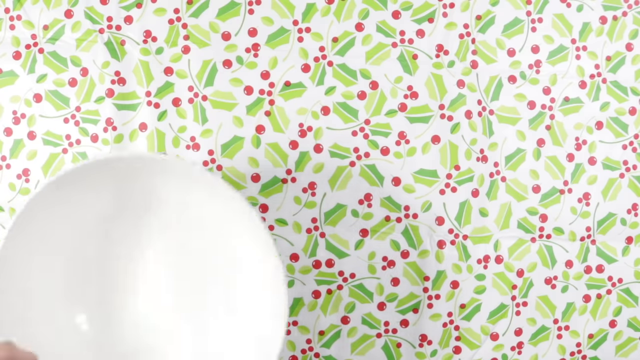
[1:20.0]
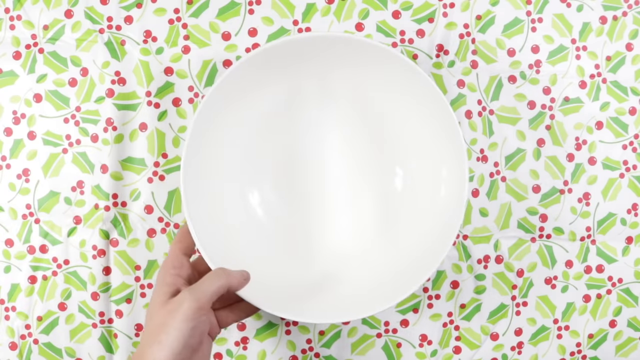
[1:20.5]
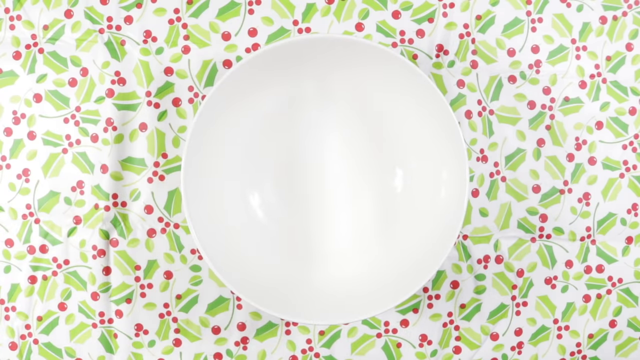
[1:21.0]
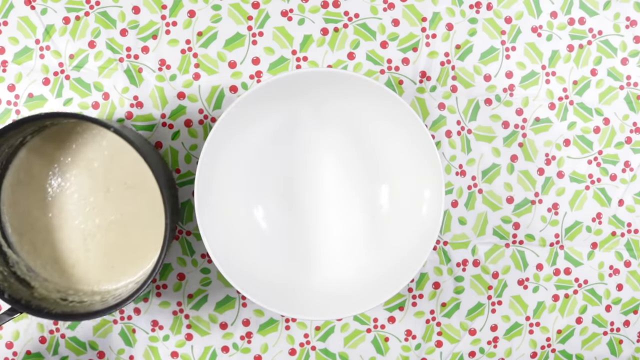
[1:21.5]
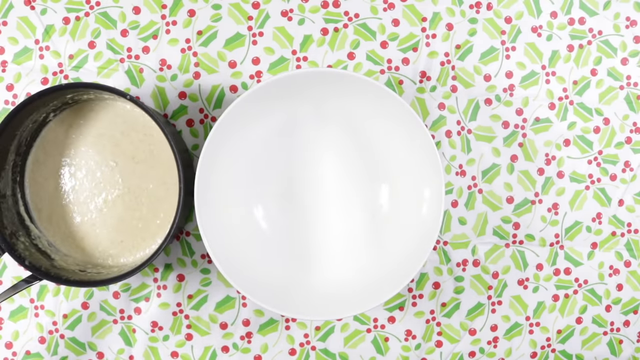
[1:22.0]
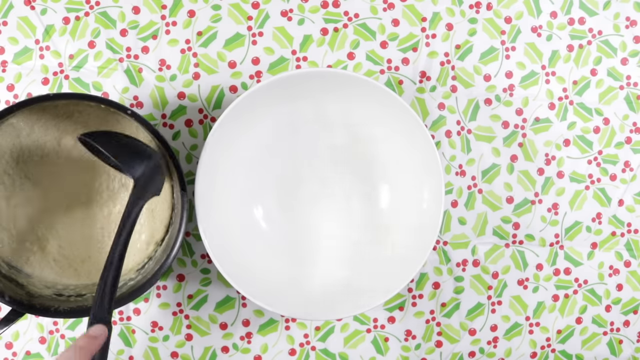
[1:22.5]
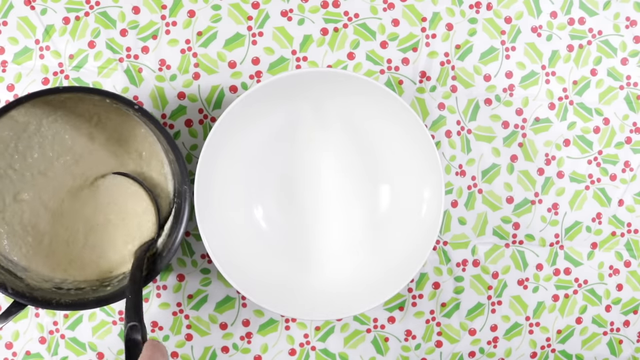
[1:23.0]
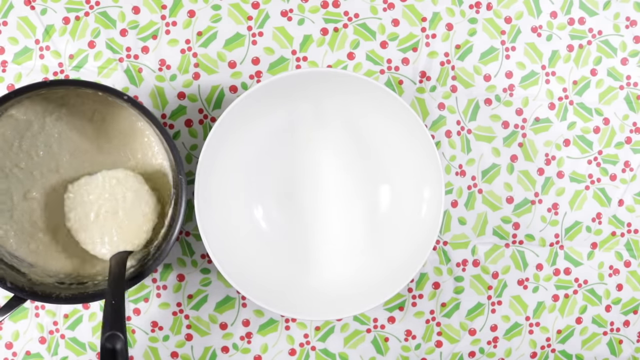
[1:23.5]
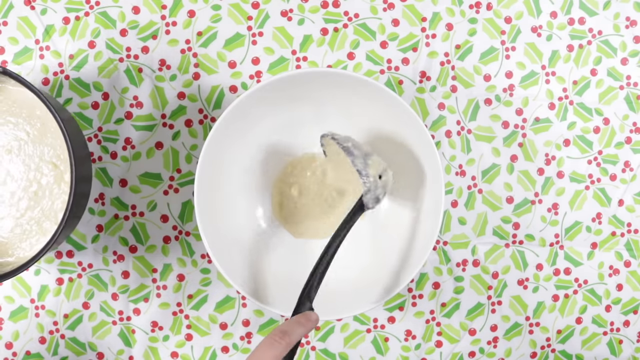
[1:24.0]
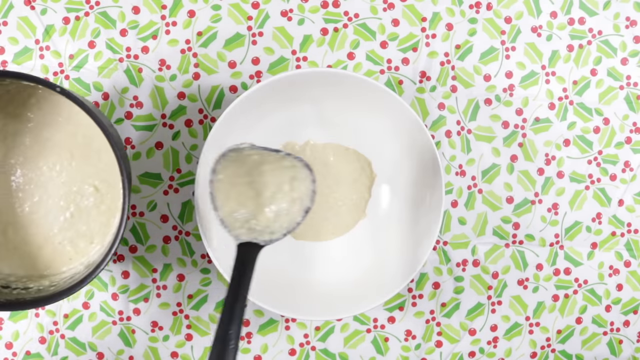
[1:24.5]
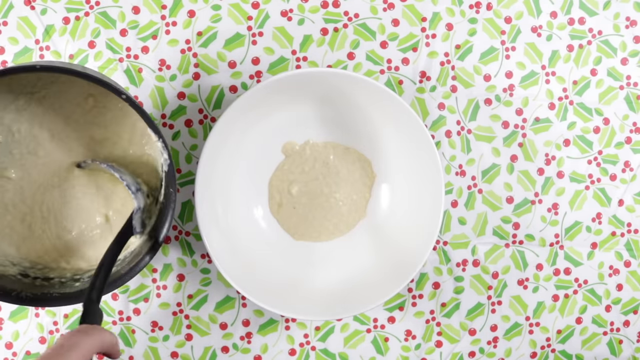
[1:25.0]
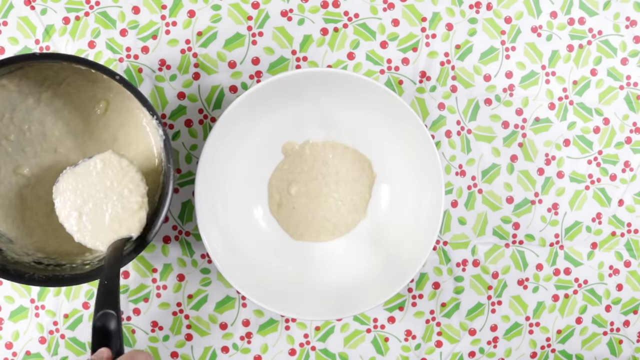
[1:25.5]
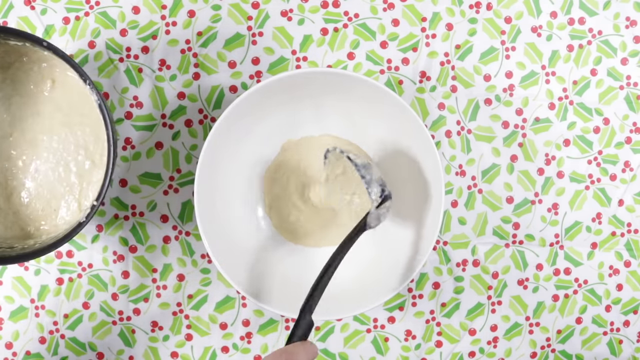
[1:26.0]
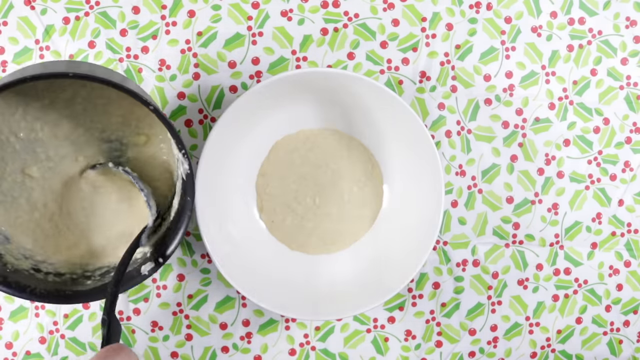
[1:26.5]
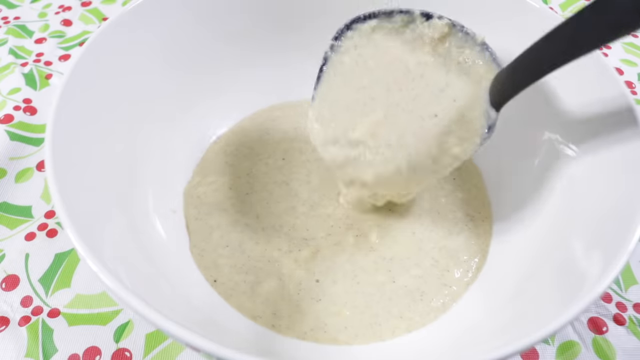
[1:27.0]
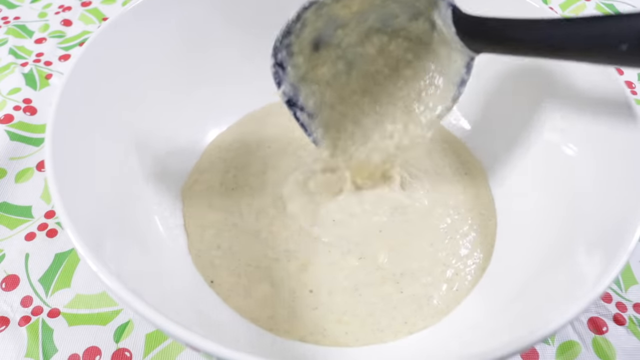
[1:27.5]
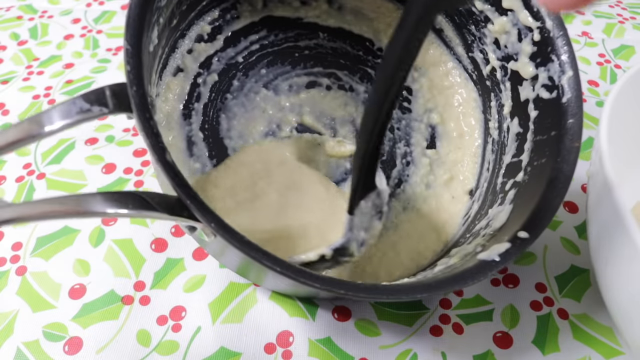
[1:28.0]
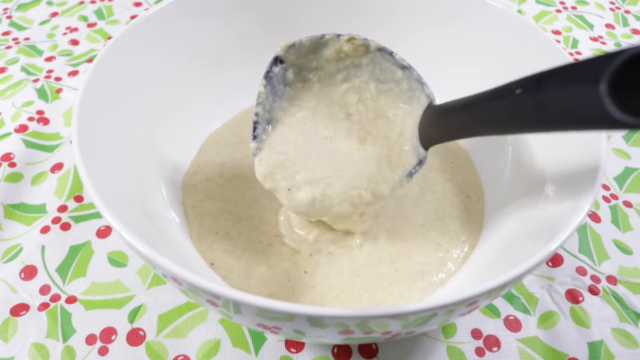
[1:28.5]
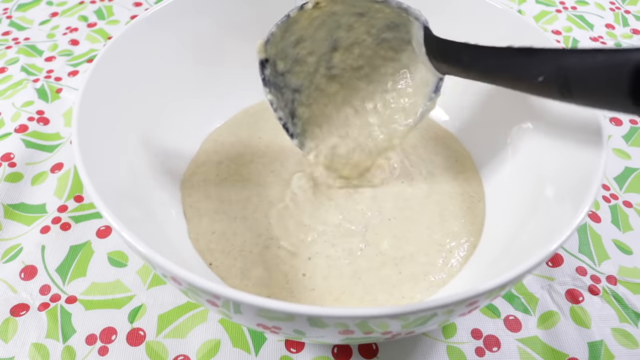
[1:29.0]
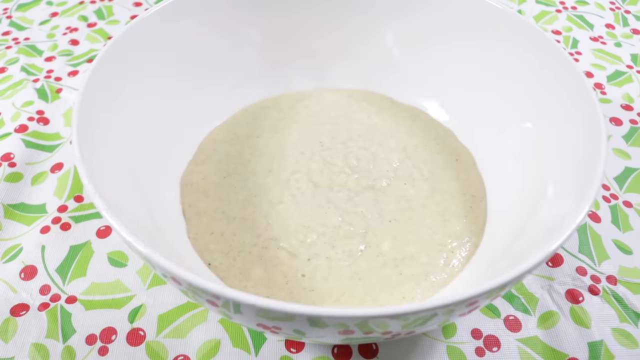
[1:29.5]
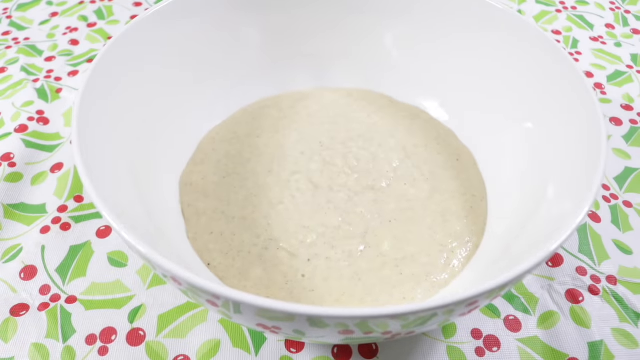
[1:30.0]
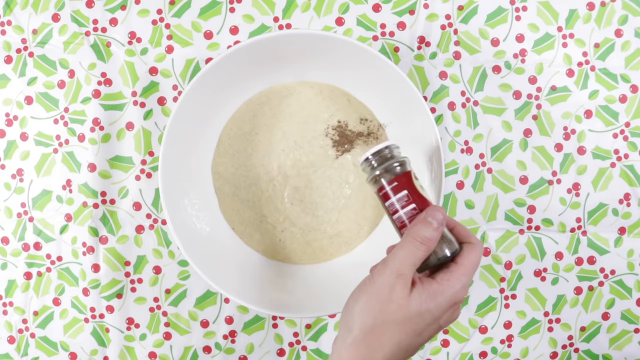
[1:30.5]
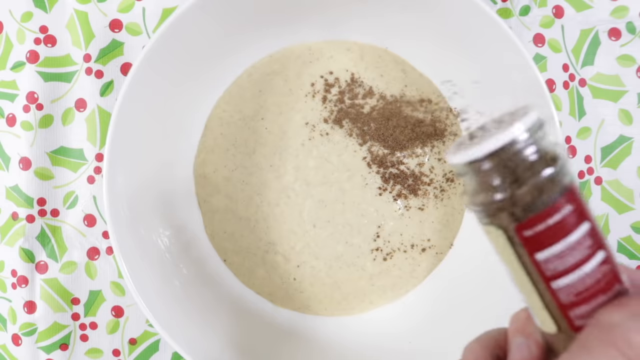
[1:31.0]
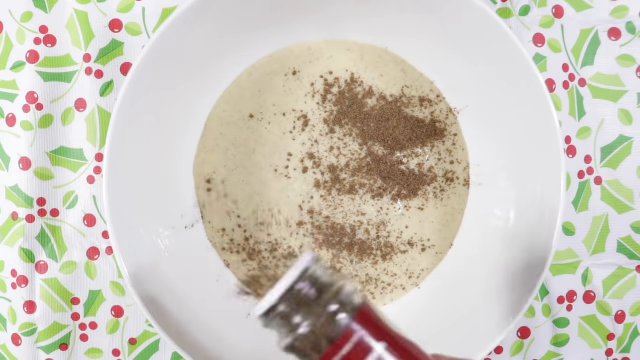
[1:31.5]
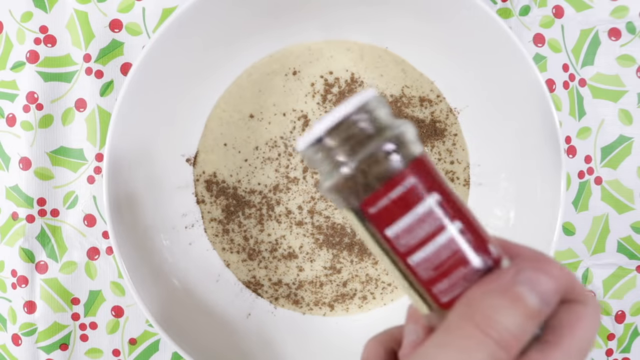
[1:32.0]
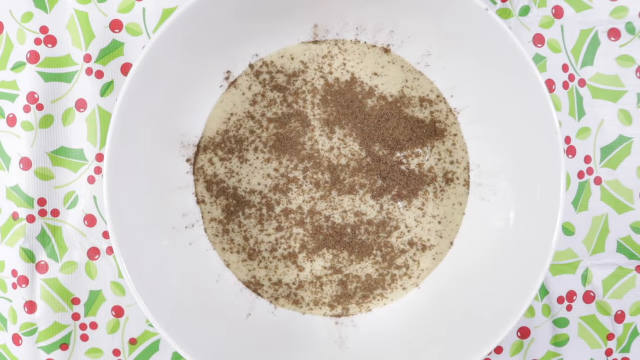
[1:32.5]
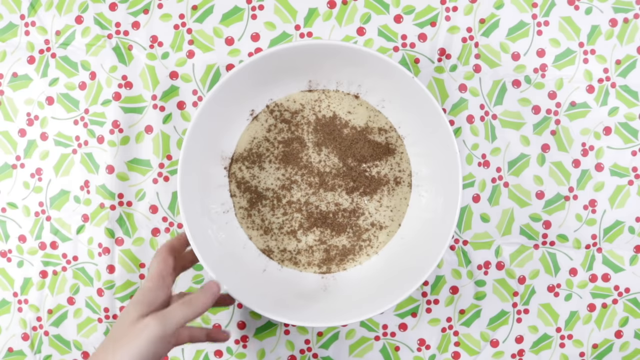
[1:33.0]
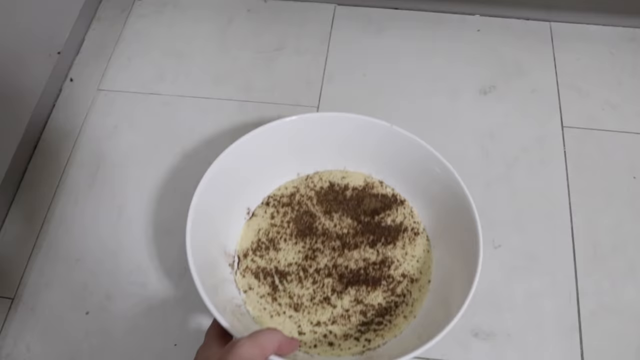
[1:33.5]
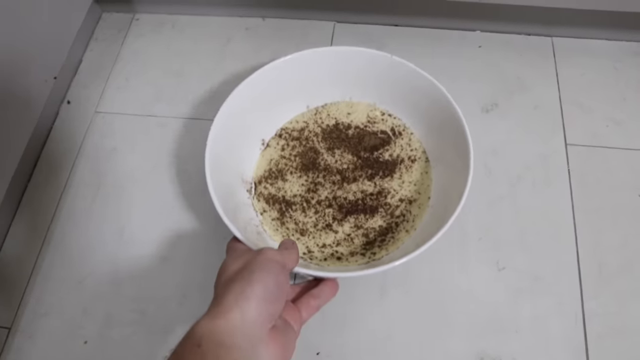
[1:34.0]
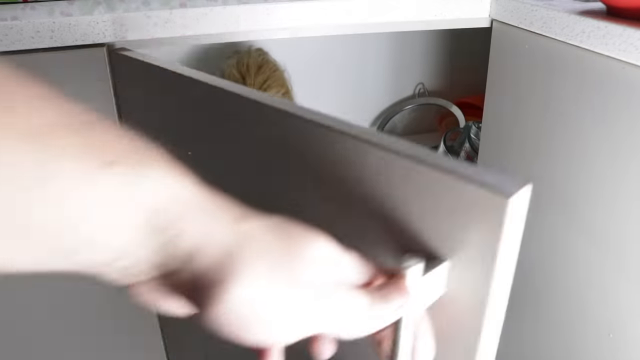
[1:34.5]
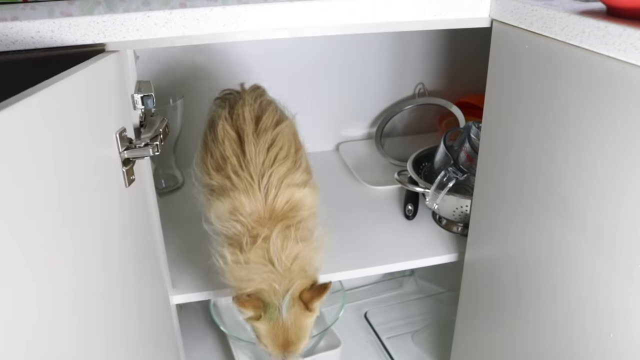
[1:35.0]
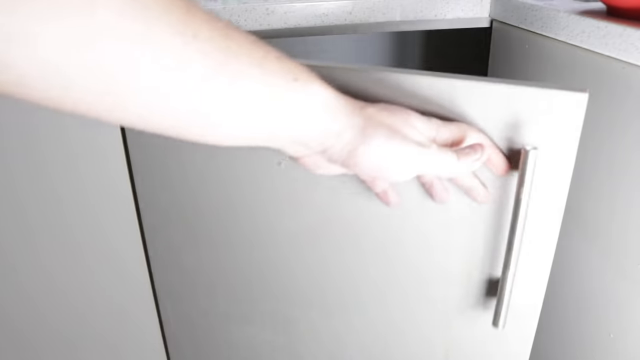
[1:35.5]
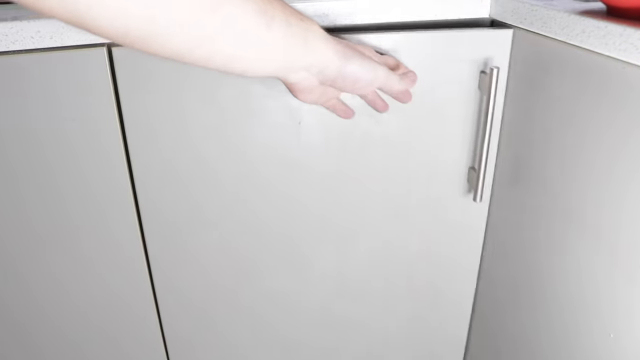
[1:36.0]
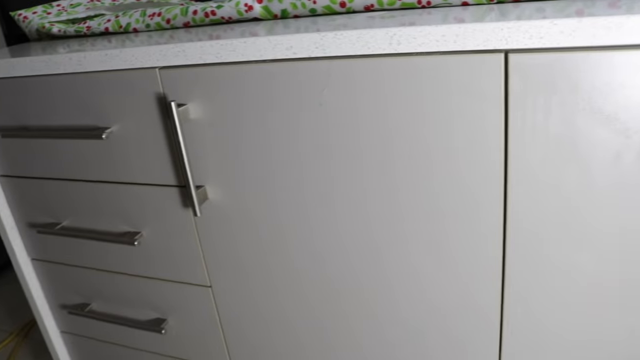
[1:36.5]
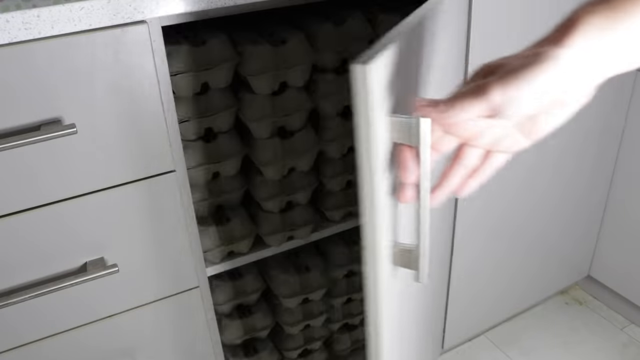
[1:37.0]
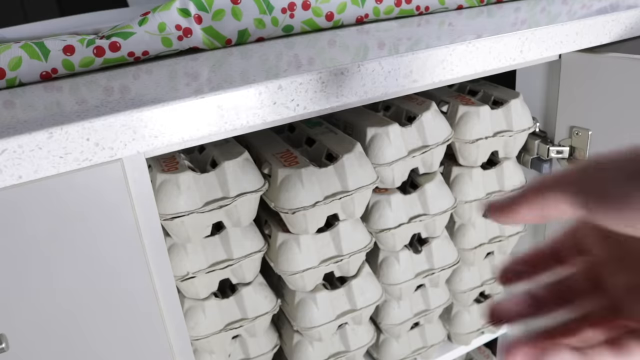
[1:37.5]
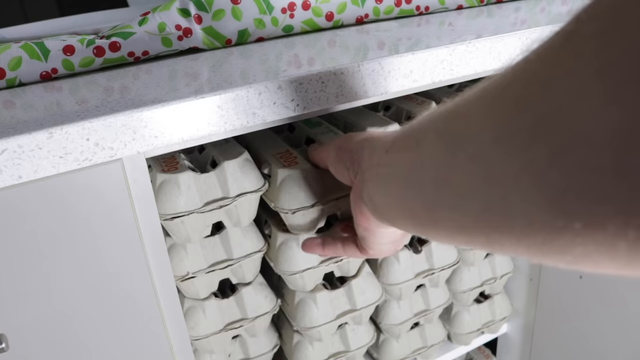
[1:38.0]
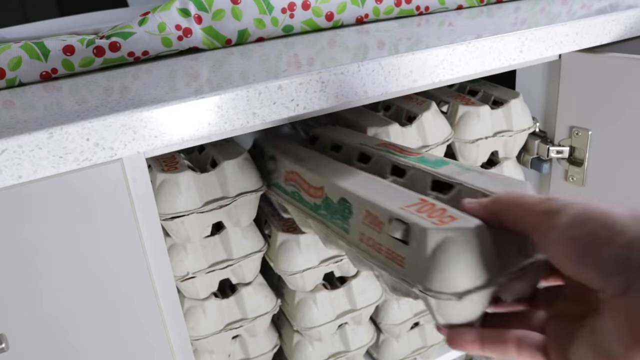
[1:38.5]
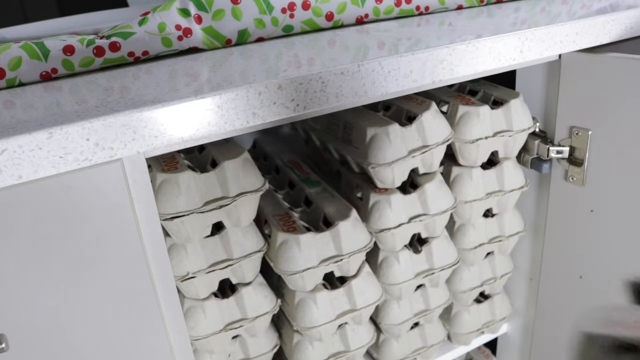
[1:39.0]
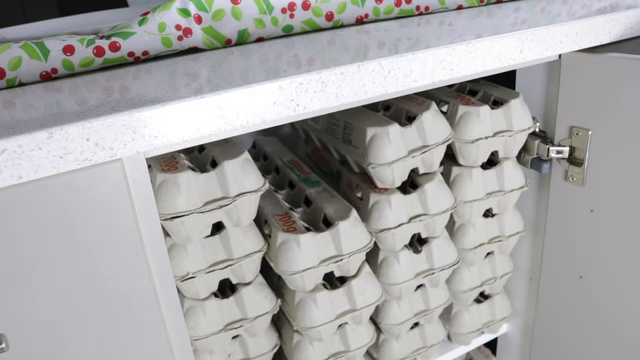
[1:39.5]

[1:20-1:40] The hand places the white bowl onto the table, and the pot with the white liquid is placed right next to it. A large black plastic ladle dips into the pot and retrieves a full spoonful of the liquid, which is placed into the bowl, followed by another and another. Close-ups show the liquid's very grainy, thick appearance, cutting back to the pot and then to the bowl as the pouring continues. The person adds more nutmeg to the liquid in the bowl, and the pot is no longer in view. The hand removes the bowl to the bottom left of the screen. The camera cuts to what appears to be a kitchen with a white countertop, and the hand places the bowl on it. Another cut shows a white cabinet, presumably below the countertop. The hand opens it, revealing what appears to be a small dog or some small animal, which jumps out onto the floor below, and the hand closes the cabinet. The camera pans left, and the hand opens another cabinet containing what appears to be multiple egg cartons stacked high on top of each other; the hand takes one carton from the top. The camera cuts to a corner of the kitchen, where what appears to be a small bowl is on the floor.